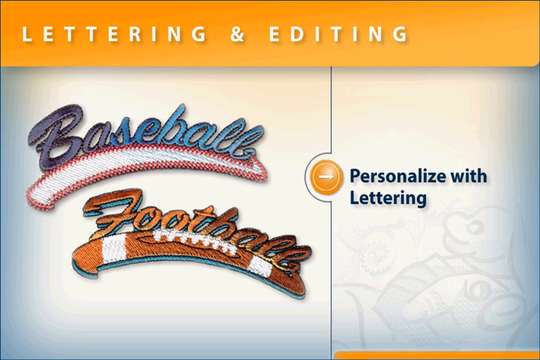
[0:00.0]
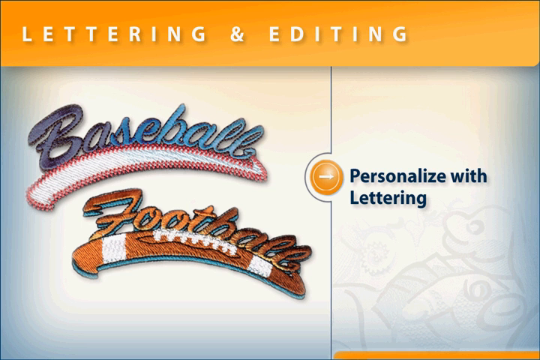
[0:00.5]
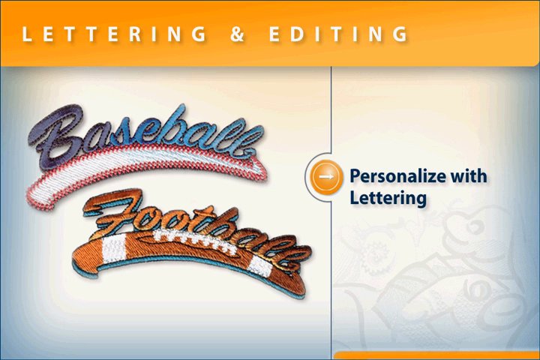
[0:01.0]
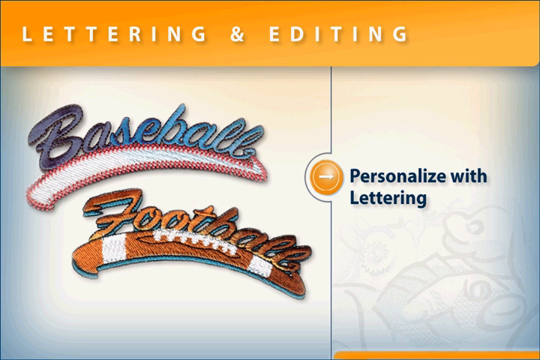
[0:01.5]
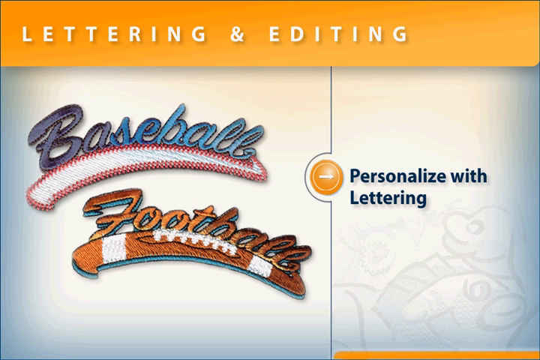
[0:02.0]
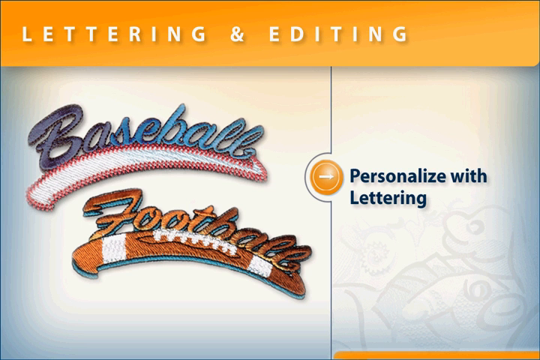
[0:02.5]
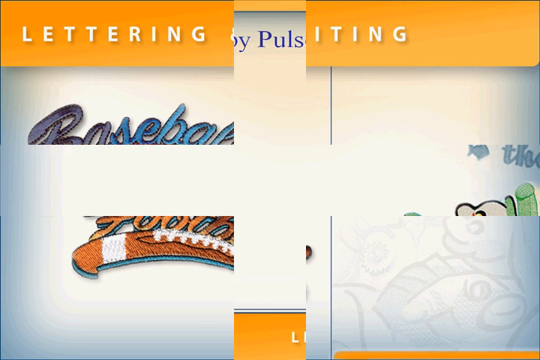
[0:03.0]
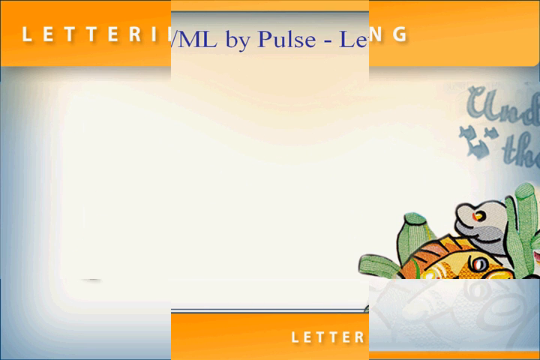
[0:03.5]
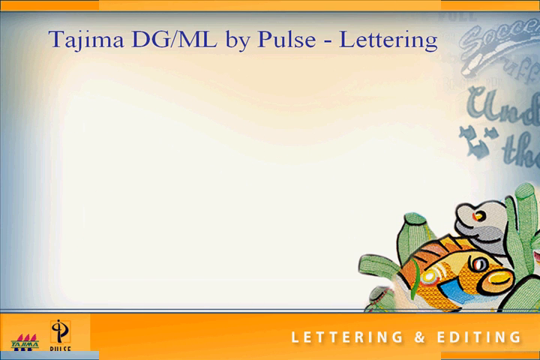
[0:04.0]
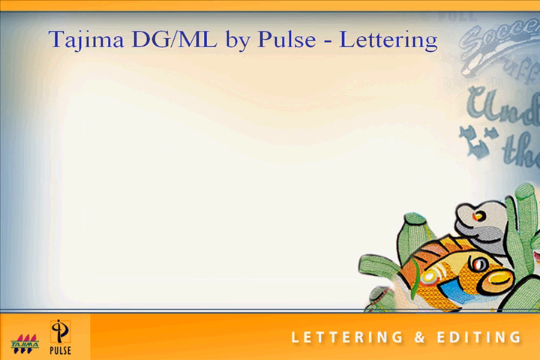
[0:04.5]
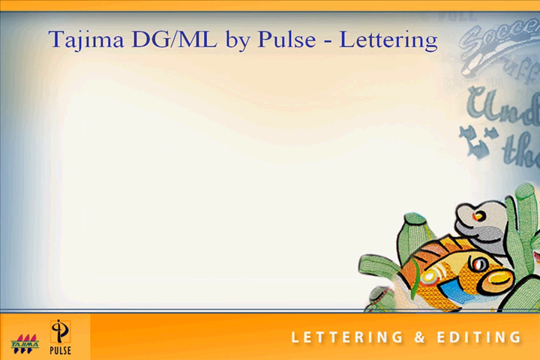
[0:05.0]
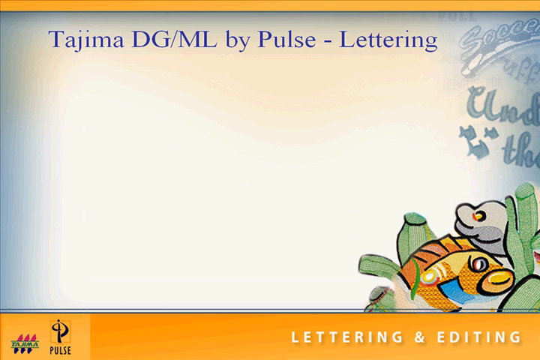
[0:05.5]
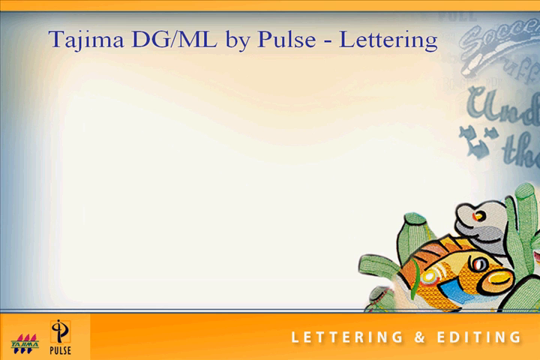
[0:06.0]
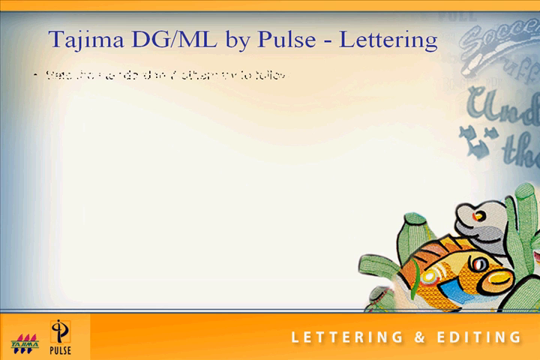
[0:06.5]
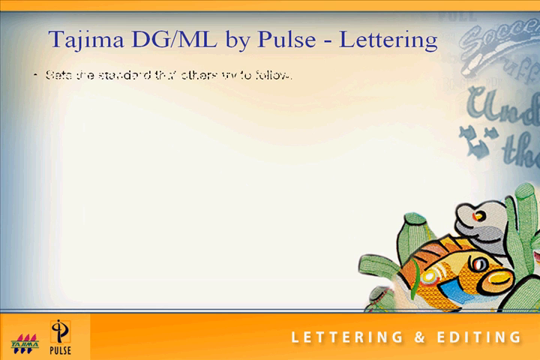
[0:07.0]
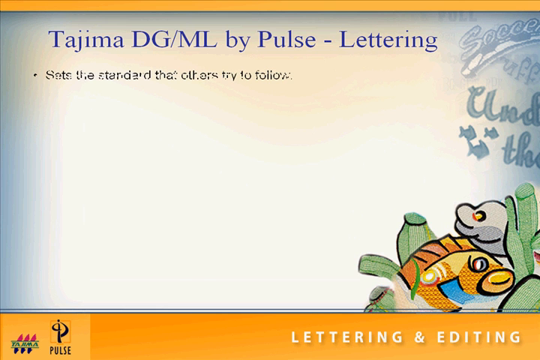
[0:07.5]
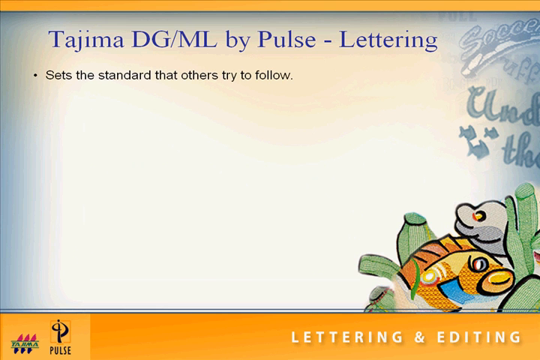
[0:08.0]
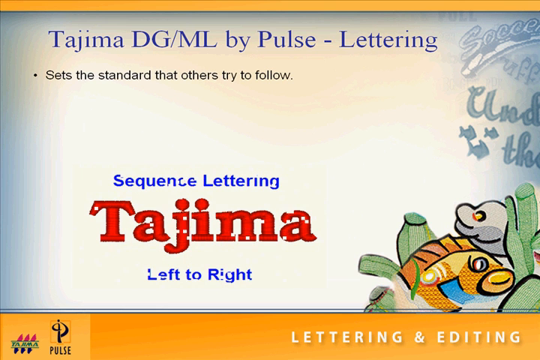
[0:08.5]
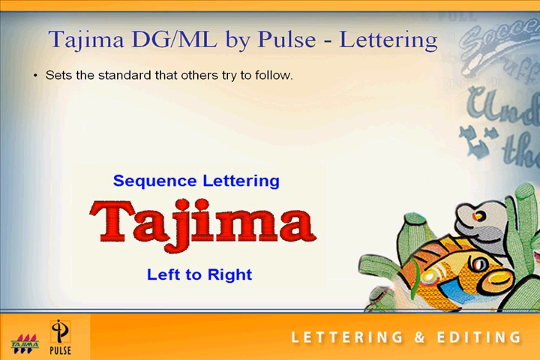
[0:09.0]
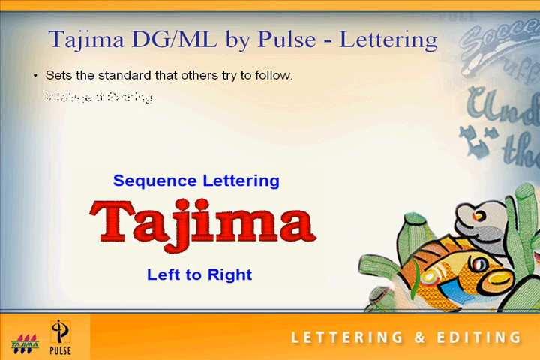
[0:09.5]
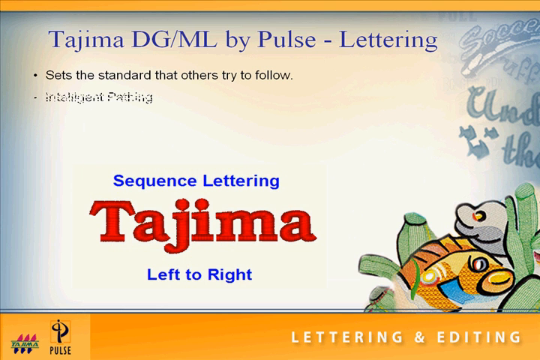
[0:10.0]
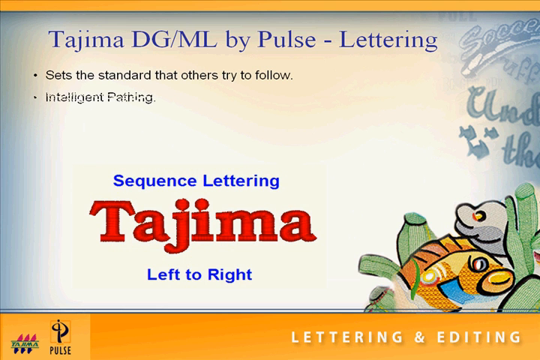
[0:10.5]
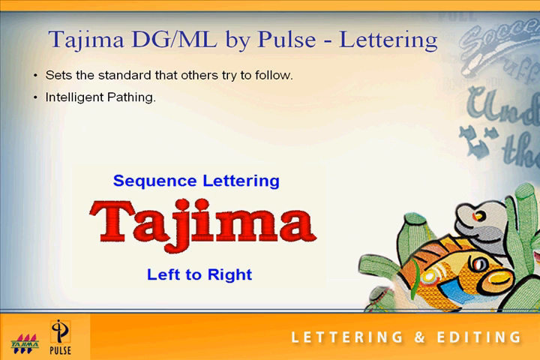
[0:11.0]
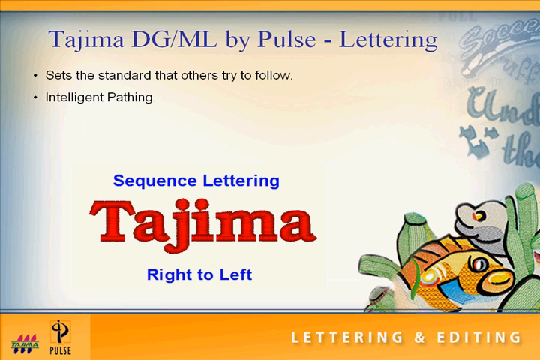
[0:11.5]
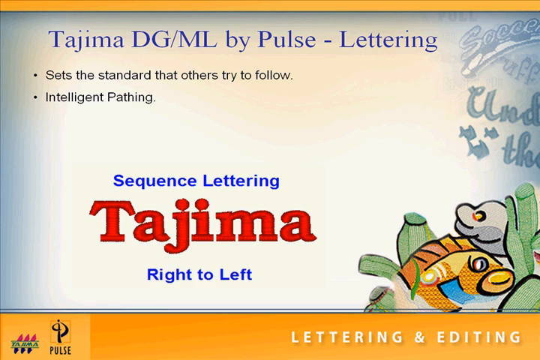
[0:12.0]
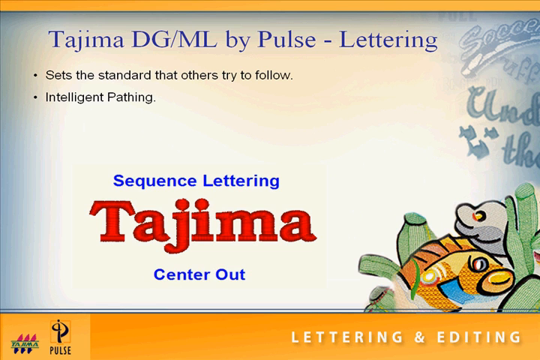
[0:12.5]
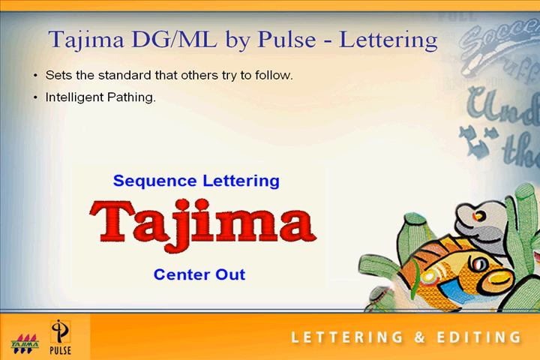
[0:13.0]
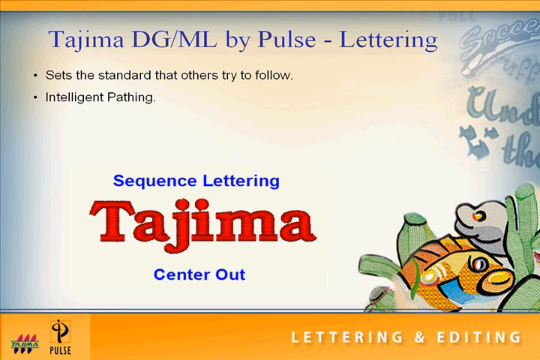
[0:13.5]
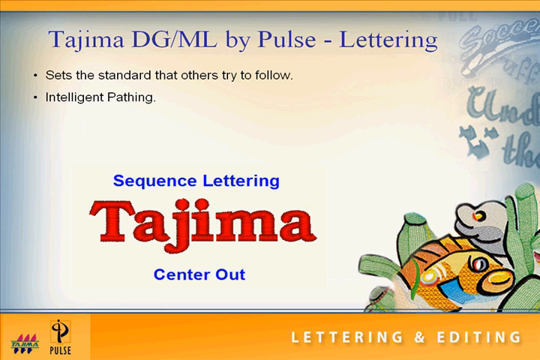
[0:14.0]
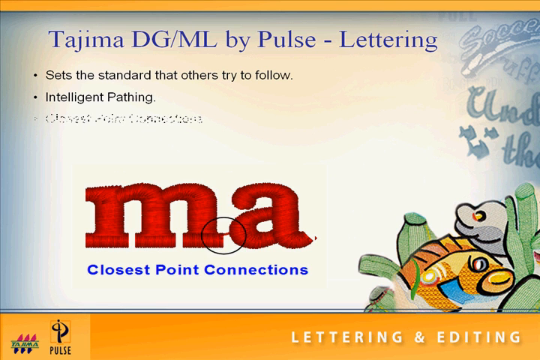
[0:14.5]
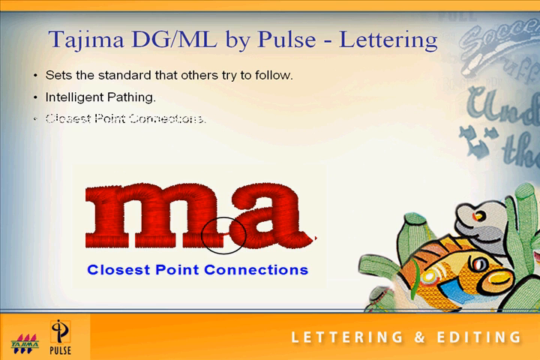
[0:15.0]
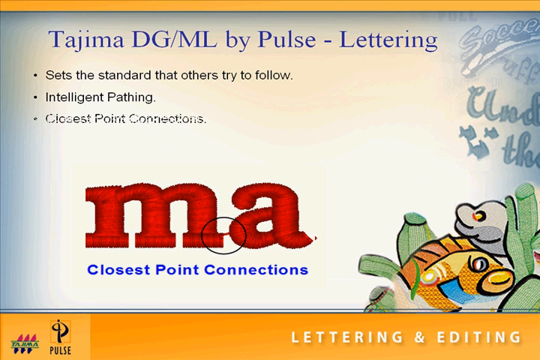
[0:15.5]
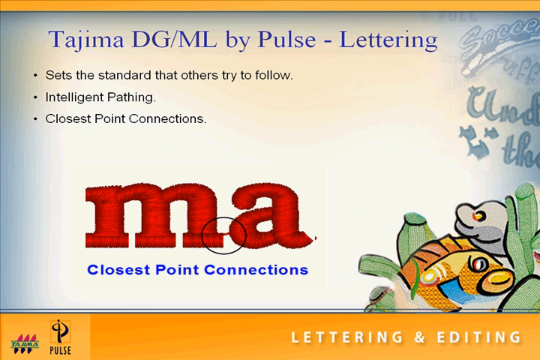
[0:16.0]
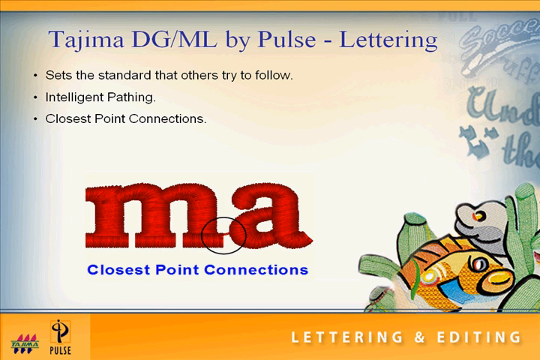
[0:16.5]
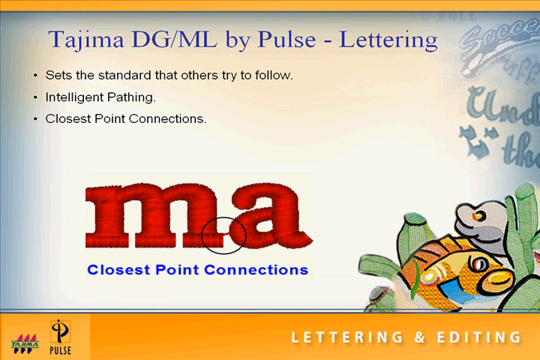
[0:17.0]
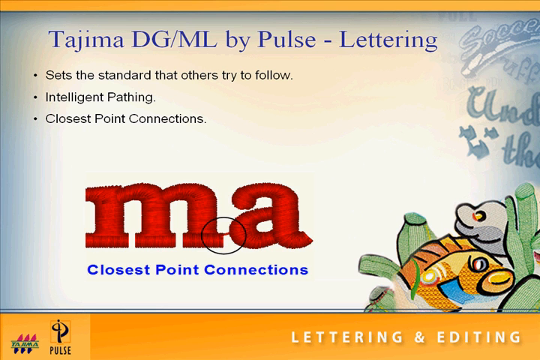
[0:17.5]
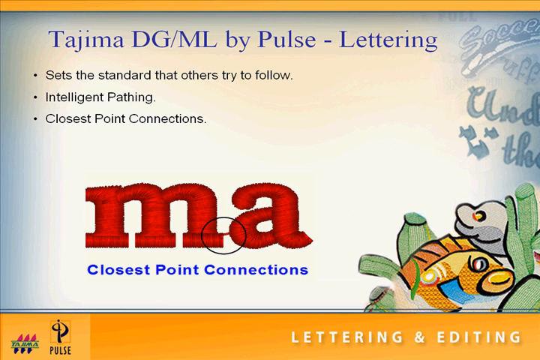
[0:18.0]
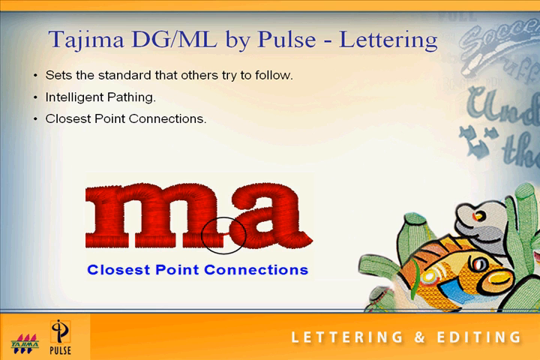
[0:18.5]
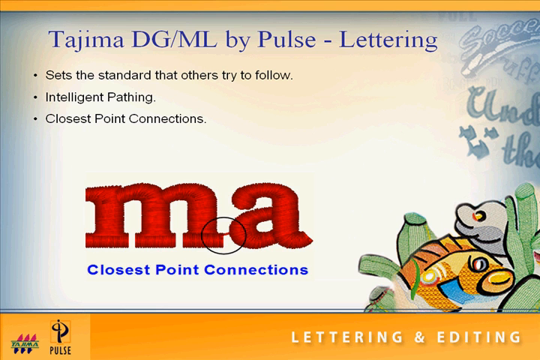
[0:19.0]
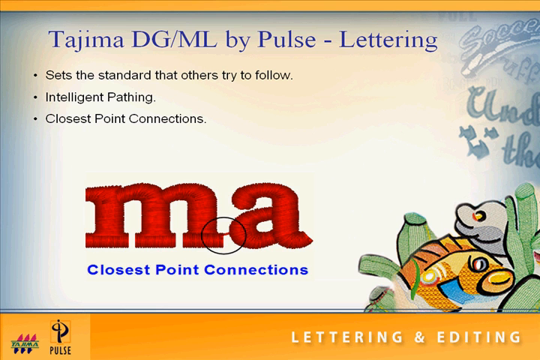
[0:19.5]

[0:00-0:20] A page is displayed on a screen with an orange rectangle at the top reading "lettering and editing." Below it, the upper part shows the word "baseball" with a white swoosh, trimmed in red, that runs from the end of the L and slides under the word. Underneath, it says "football," and the top of a football is visible with white ties; the rest of the ball is brown with two white stripes. On the right, it says "personalize with lettering." Next, the top of the screen reads "Tajama DG/ML by Pulse Lettering" and "sets the standard that others try to follow." Further text reads "sequence lettering," "Tajama," "left to right," "right to left," and "center out." There is an "MA," and it says "close point connections," showing an M attached to an A in stitching that seems to be embroidered onto a shirt or some other surface.